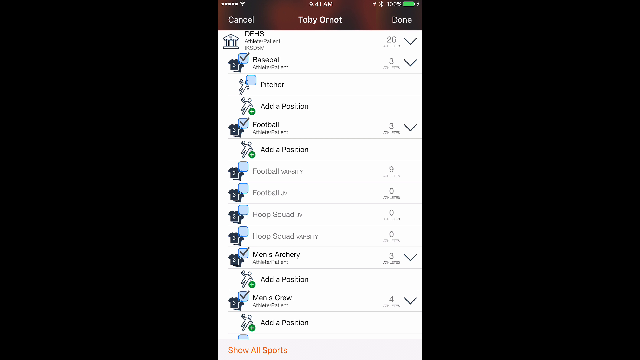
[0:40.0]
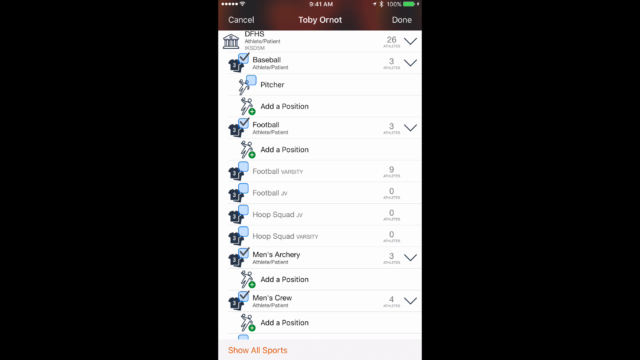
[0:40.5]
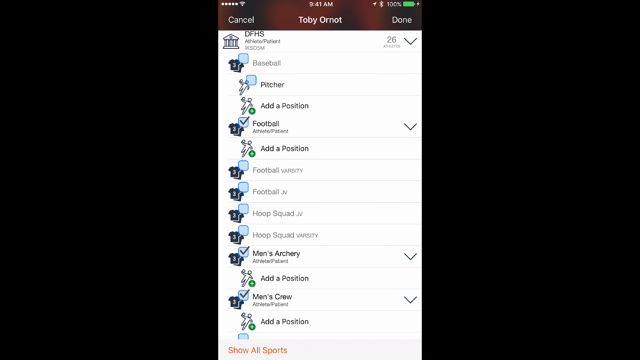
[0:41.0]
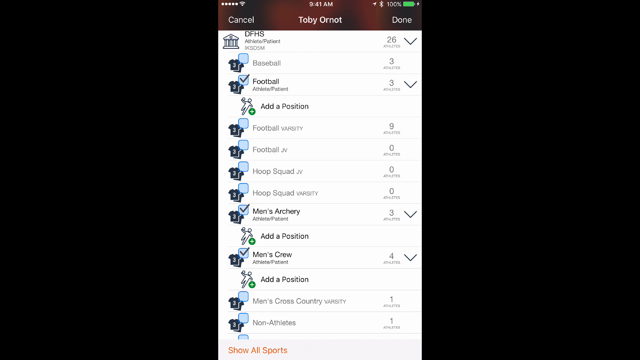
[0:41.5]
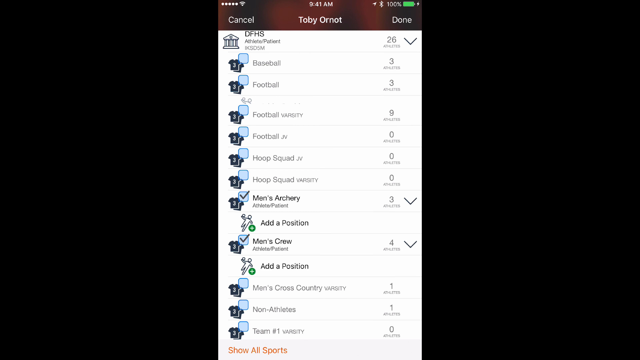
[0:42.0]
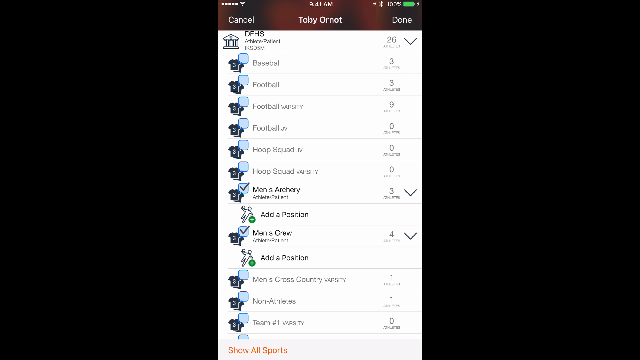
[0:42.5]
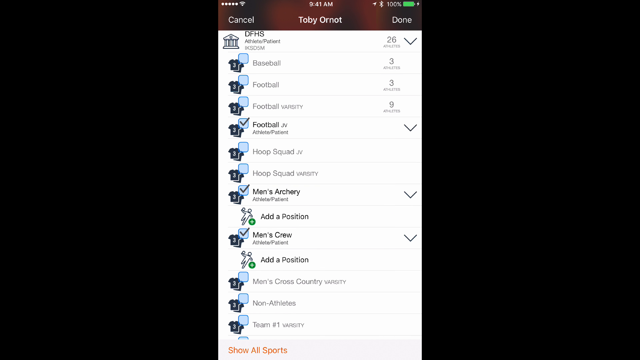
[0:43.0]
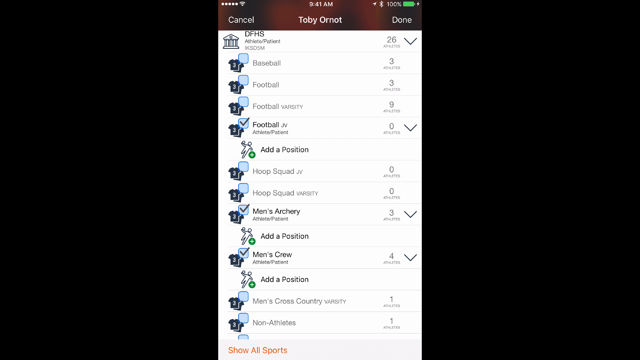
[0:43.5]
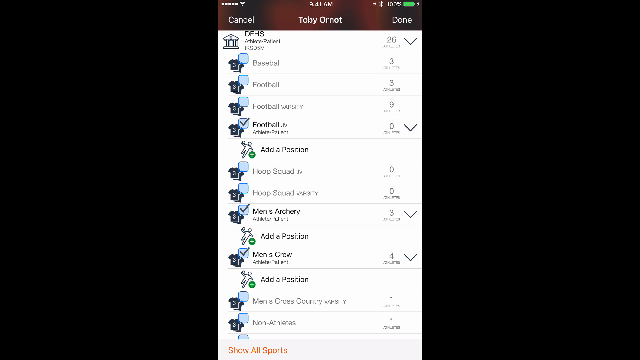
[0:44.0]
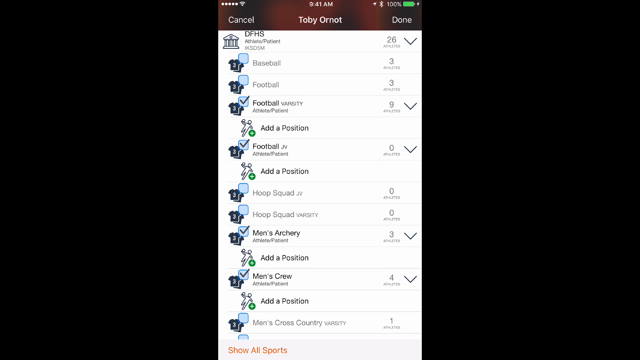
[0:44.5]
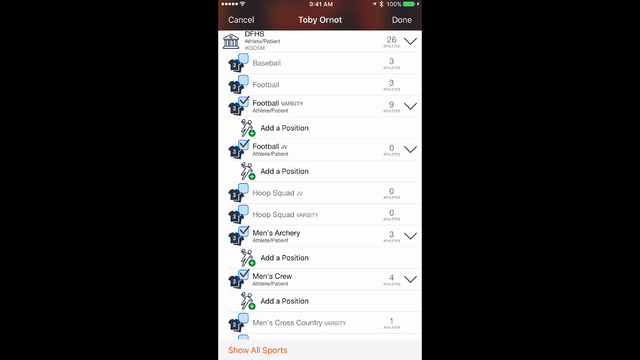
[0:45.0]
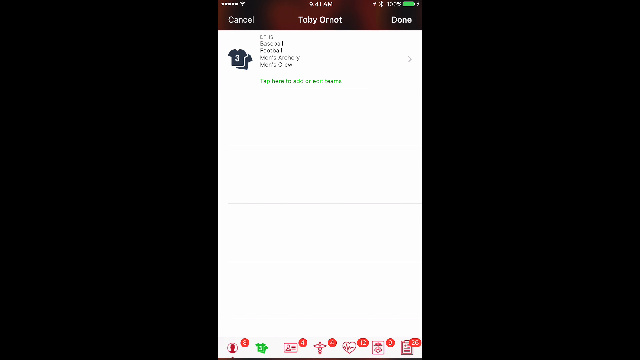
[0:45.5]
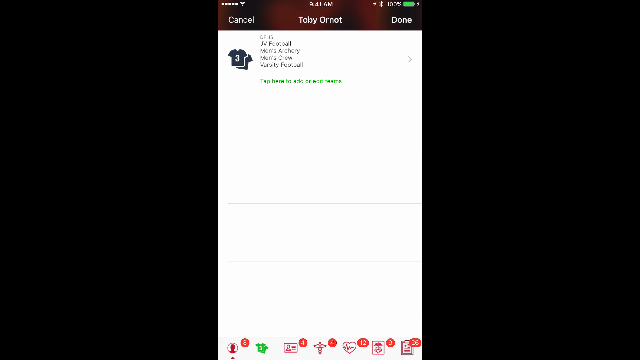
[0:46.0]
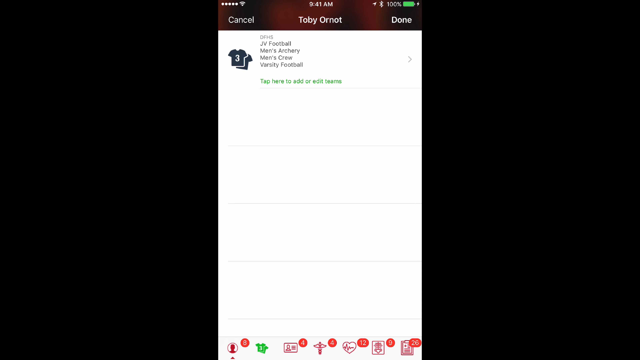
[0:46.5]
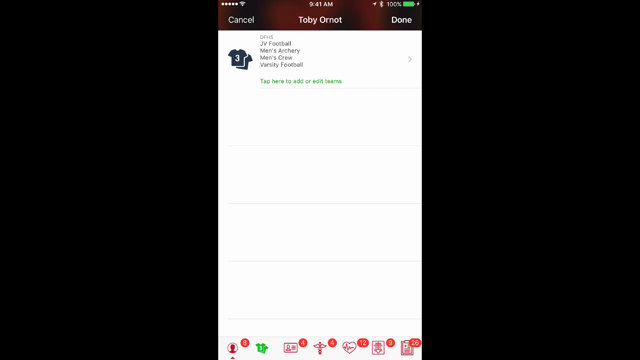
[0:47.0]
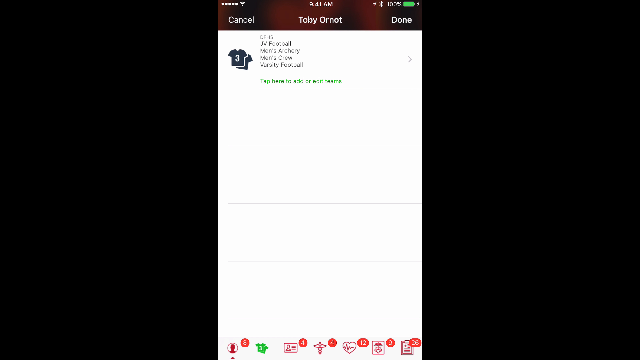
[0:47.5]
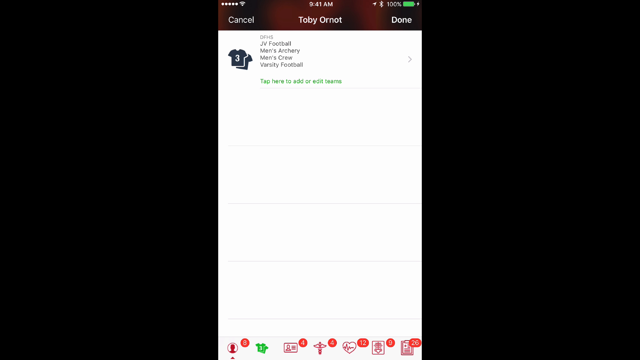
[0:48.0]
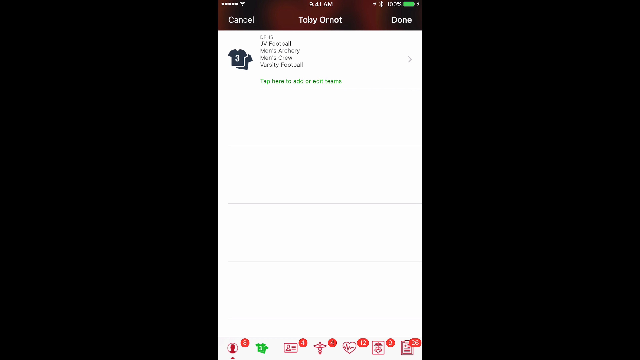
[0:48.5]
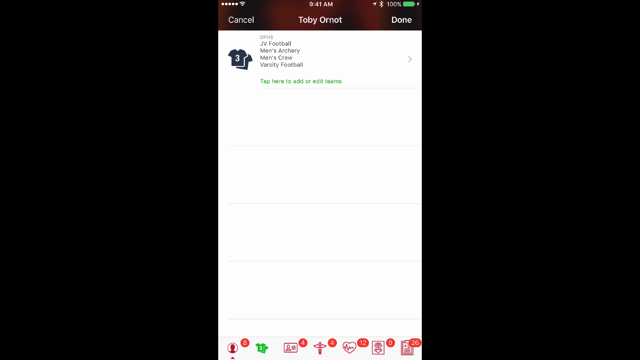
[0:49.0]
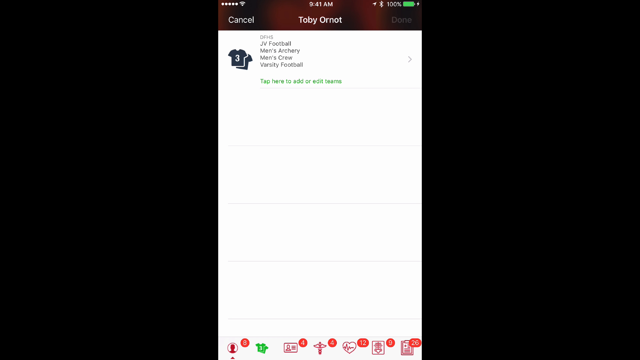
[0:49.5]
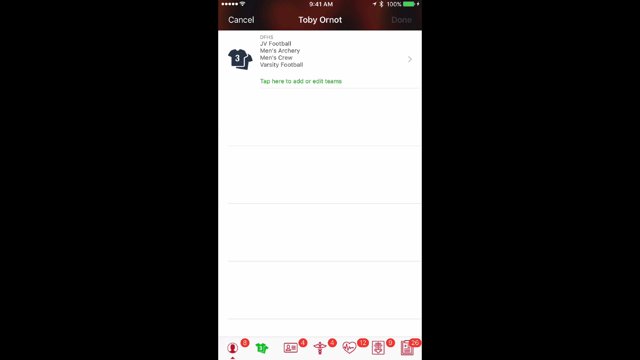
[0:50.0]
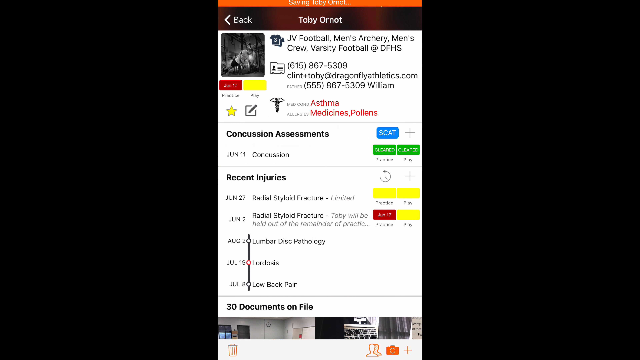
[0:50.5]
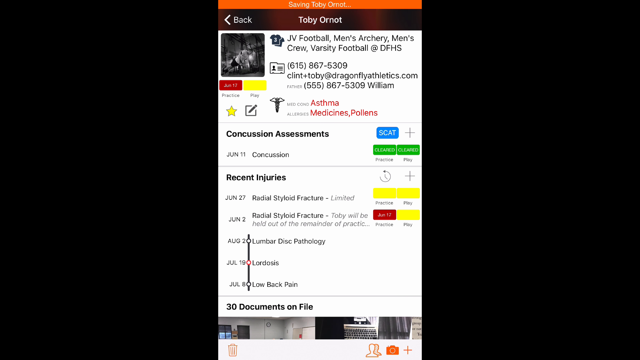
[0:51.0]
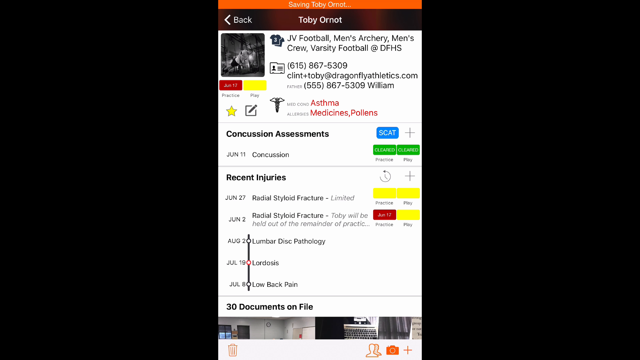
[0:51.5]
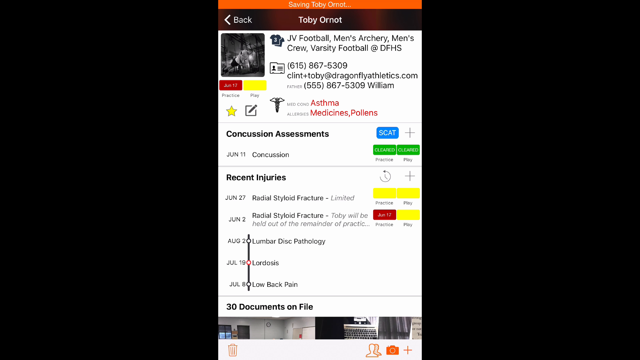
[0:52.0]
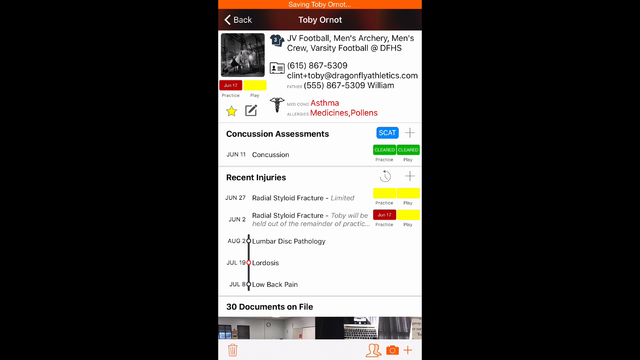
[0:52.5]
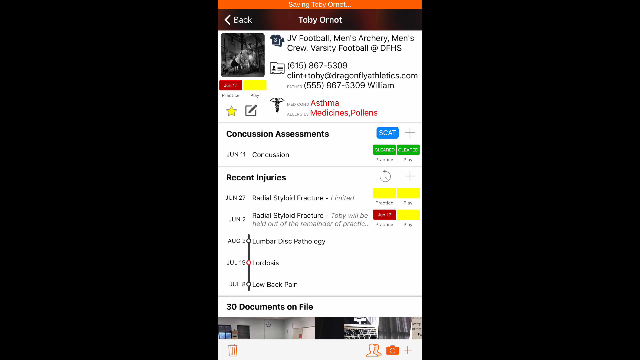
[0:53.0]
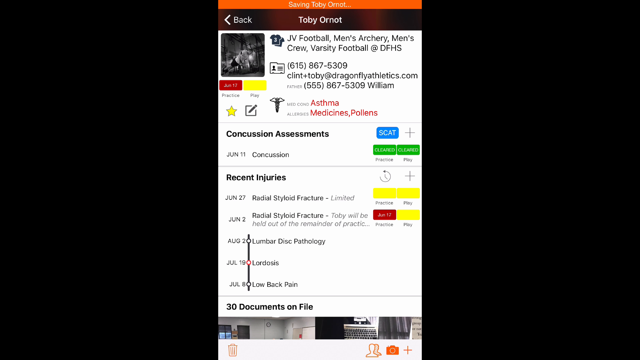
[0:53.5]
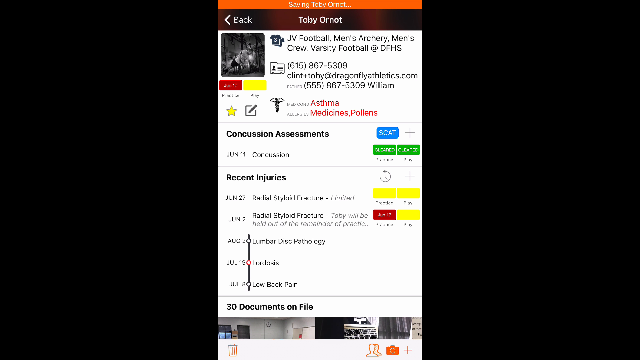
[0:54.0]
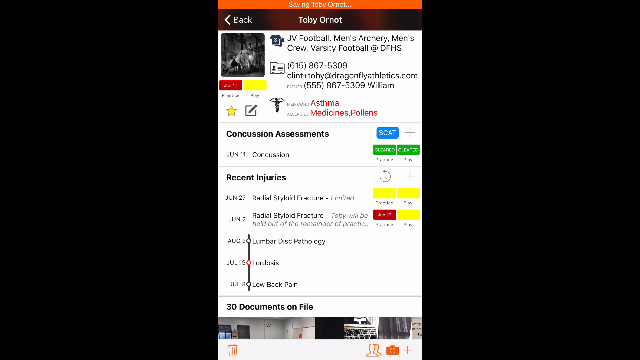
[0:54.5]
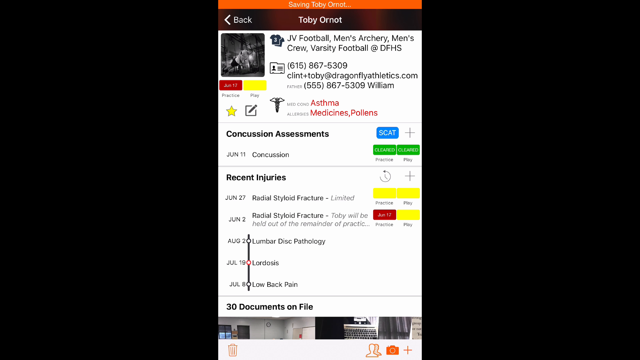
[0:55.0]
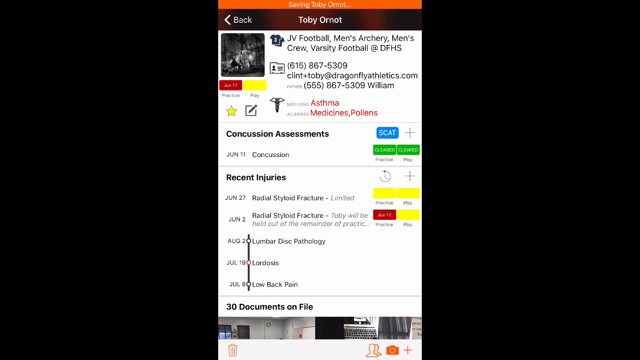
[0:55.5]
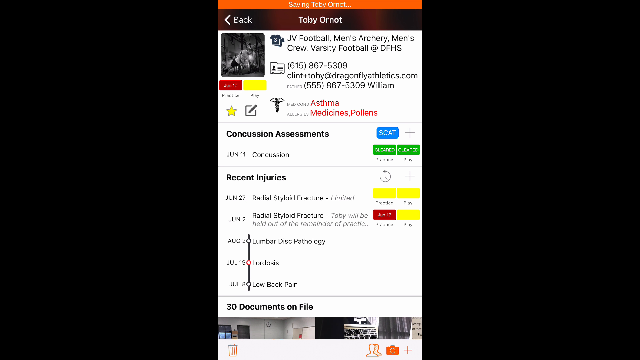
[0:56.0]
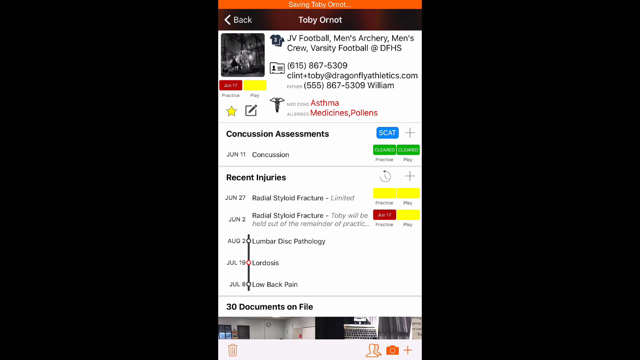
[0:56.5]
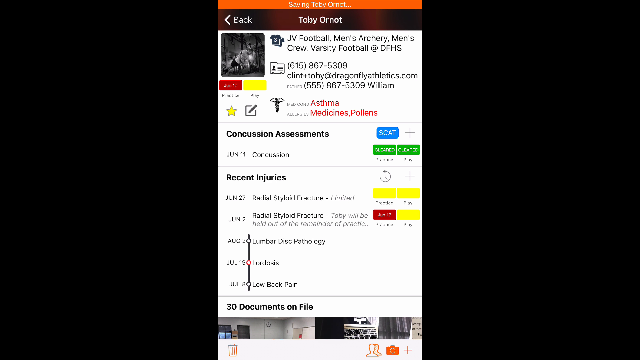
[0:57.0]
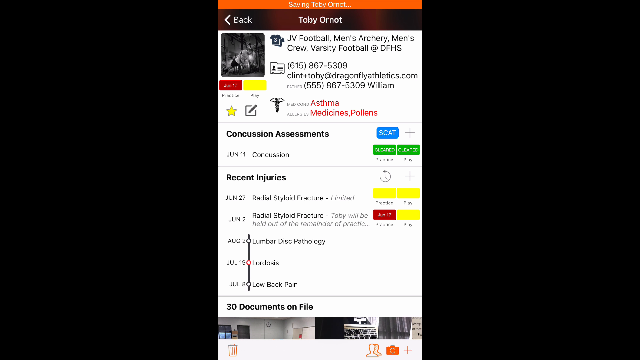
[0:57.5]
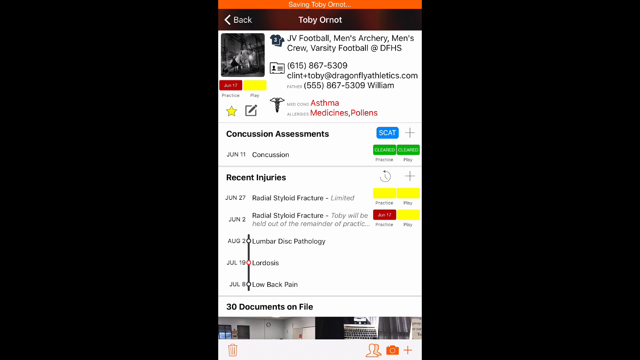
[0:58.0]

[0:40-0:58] An app page, apparently a medical app possibly for a school athlete, shows at the top the name Toby, last name O-R-N-O-T. At the top it says "JV Football, Men's Archery, Men's Crew, Varsity Football @ DFHS," apparently the sports he is involved in. Below are a phone number, what looks like an email address, and another phone number, apparently contact info. Underneath are medical conditions, including asthma, and the medicines to be taken. There are sections for "Concussion Assessments" and "Recent Injuries"; the injuries listed appear to include two Radial Styloid Fractures, one on June 27th and one on June 2nd, as well as Lumbar Disc Pathology and a few other items.